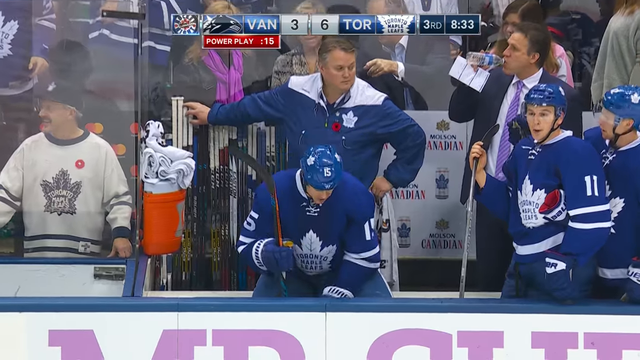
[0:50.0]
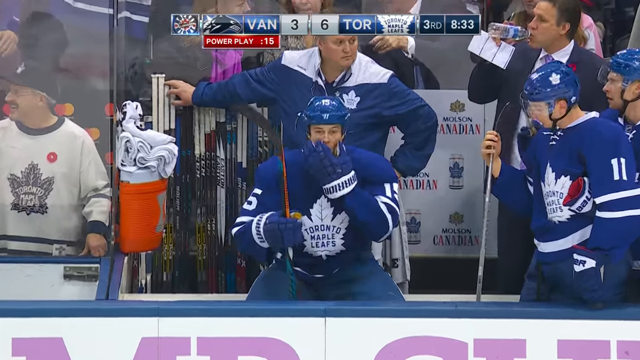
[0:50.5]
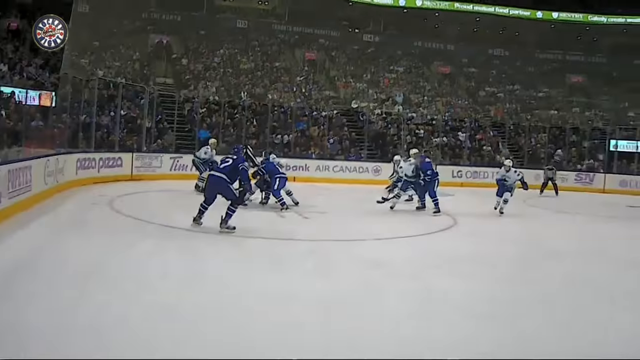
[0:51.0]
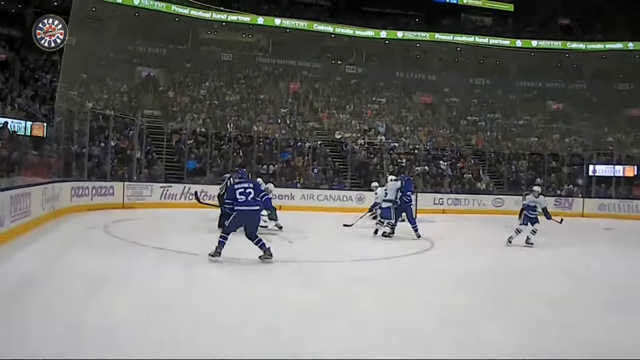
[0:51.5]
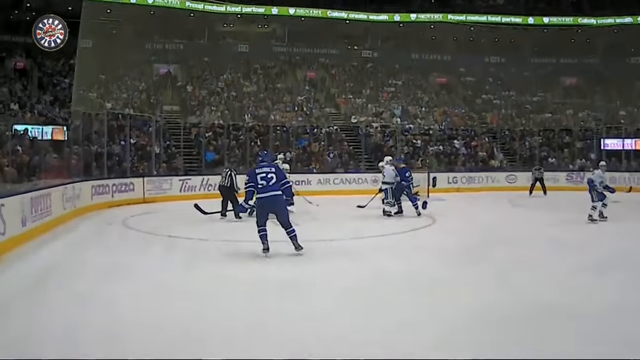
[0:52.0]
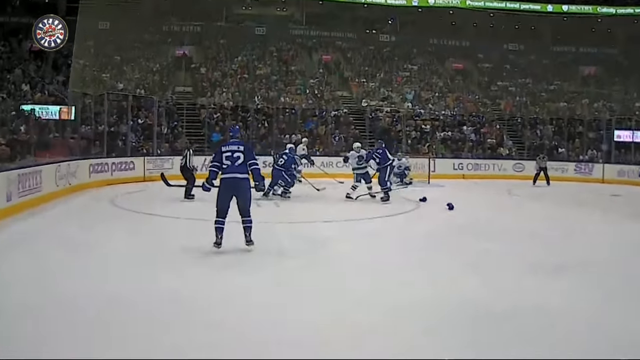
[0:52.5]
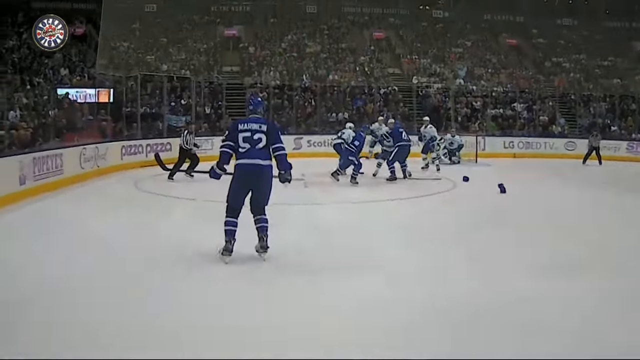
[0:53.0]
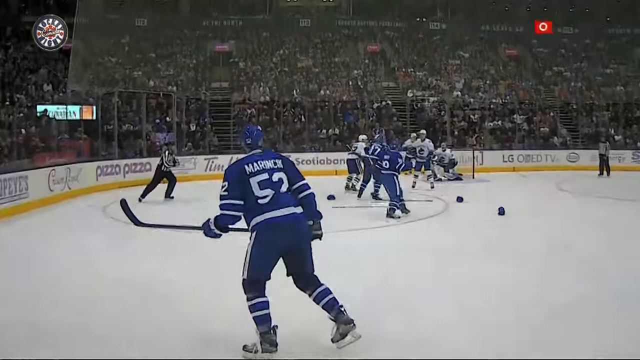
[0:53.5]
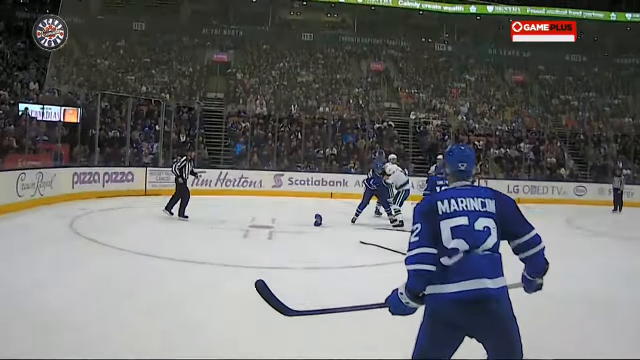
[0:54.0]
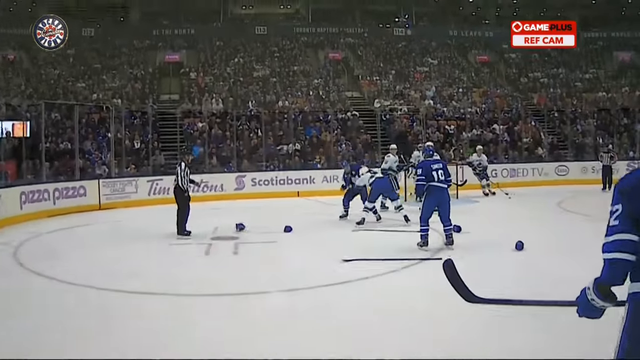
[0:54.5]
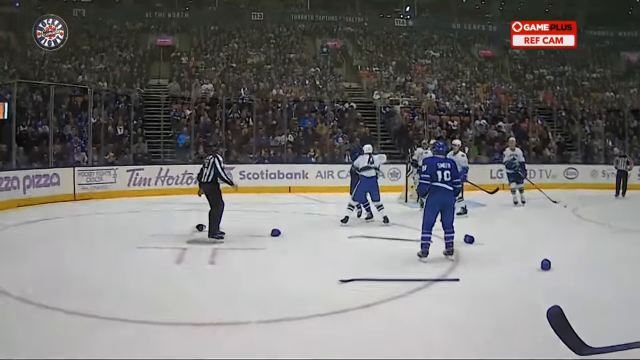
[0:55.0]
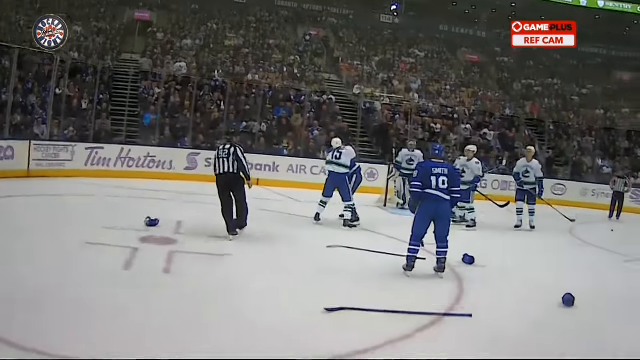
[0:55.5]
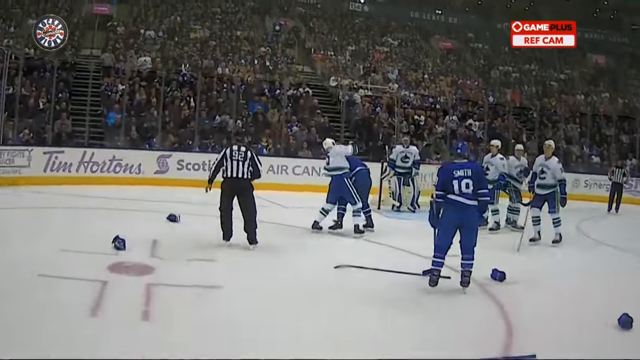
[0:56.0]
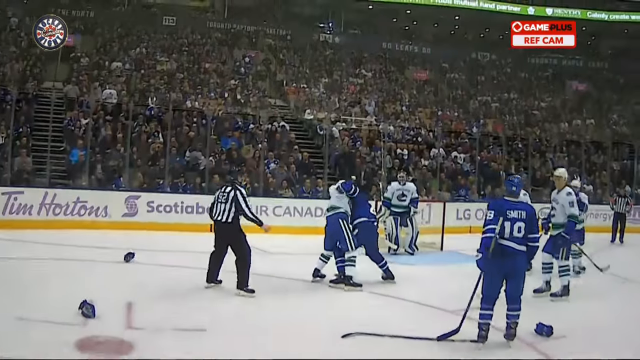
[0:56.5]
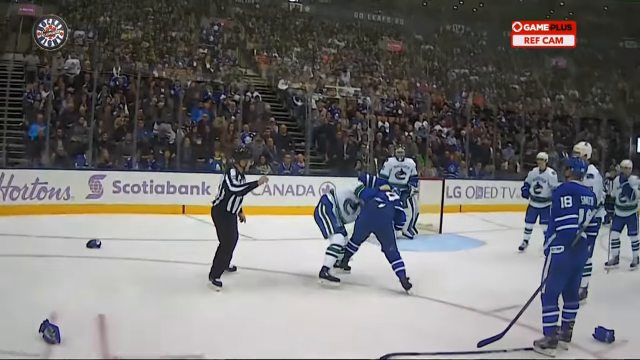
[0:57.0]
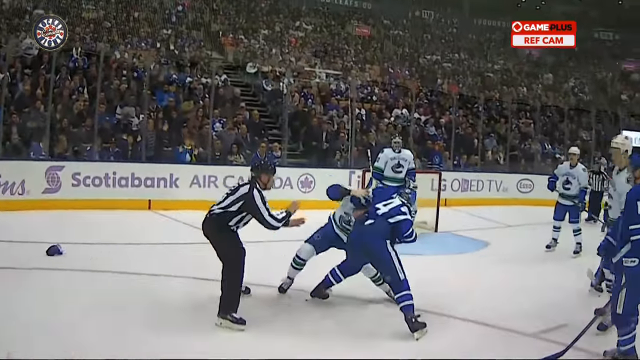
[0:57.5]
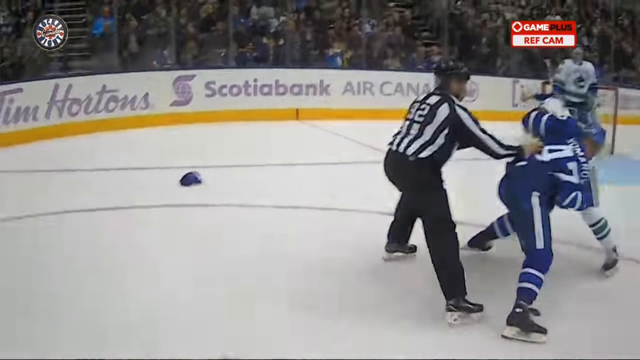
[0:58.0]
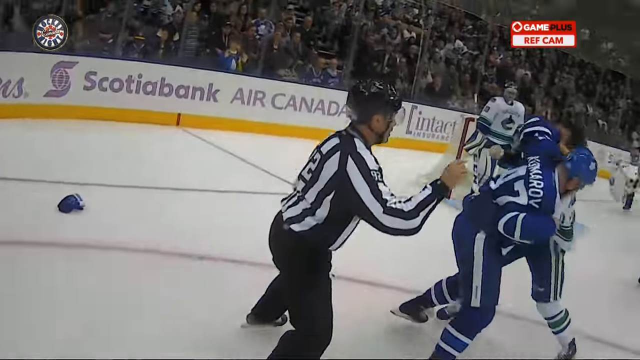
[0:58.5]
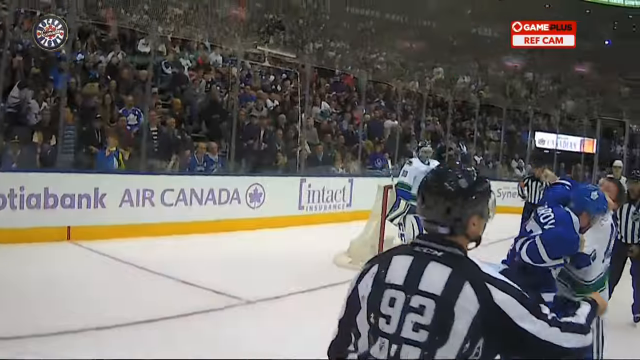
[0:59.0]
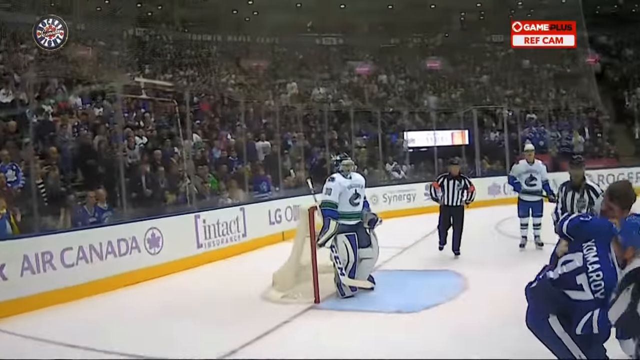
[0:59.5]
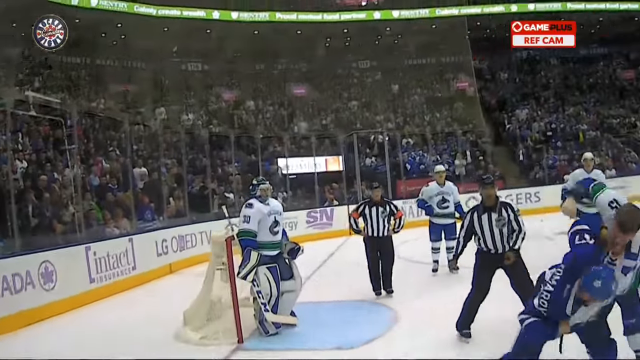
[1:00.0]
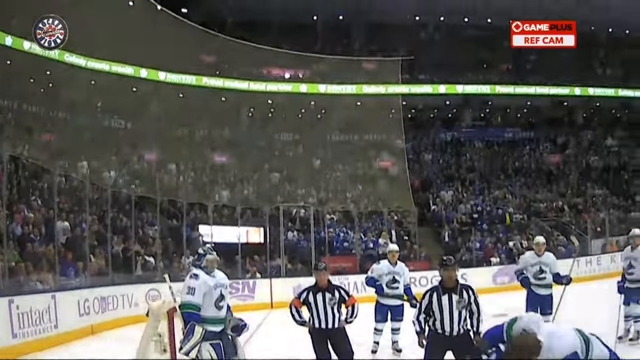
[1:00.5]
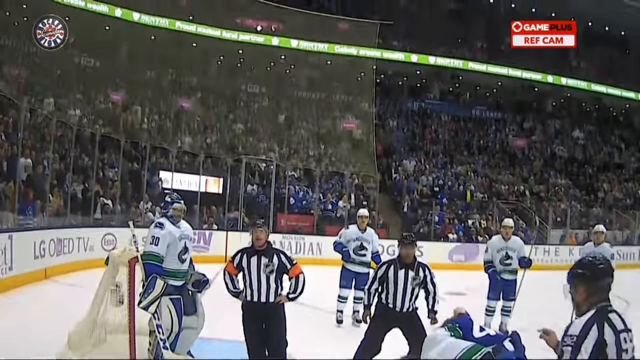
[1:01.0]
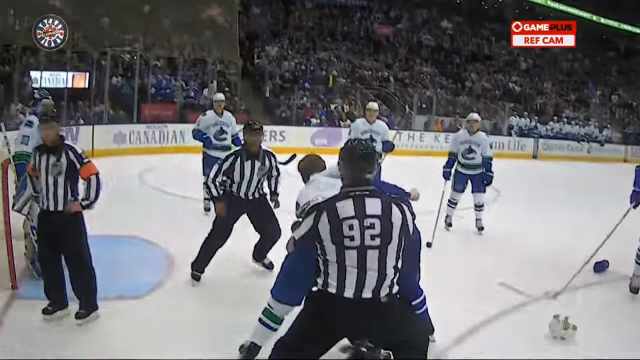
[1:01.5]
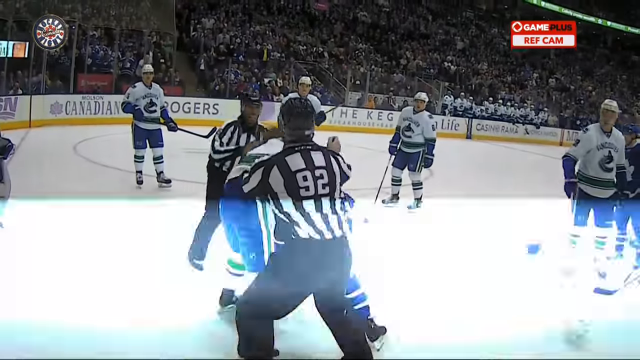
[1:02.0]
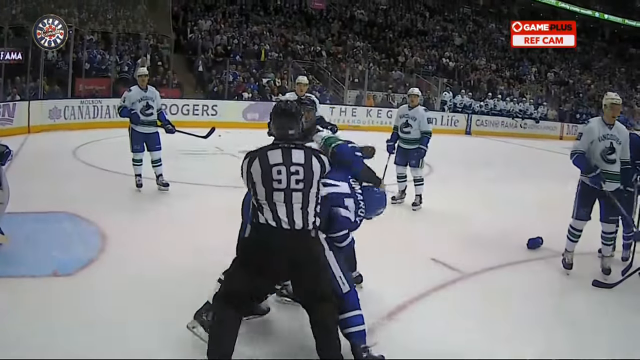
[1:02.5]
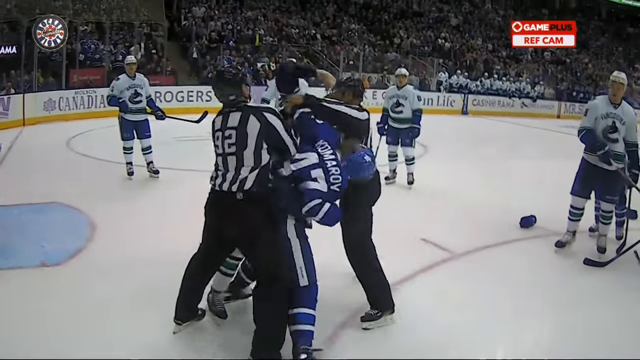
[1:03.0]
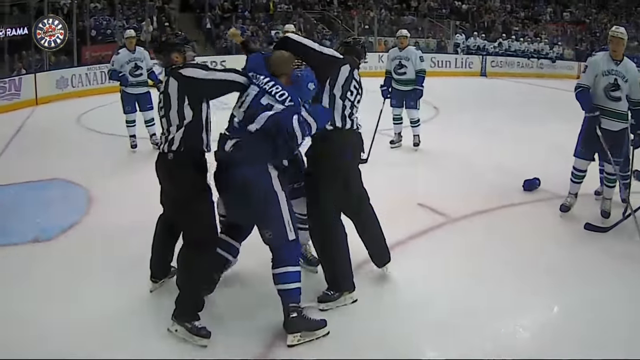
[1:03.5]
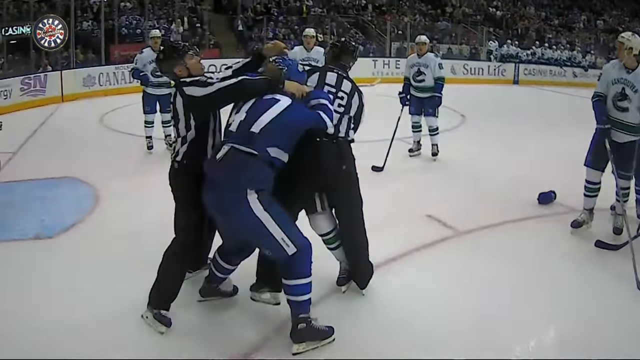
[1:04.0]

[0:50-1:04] A different angle shows the fight from a referee camera, from the point of view of one of the referees who is standing and watching rather than one of those interacting with the players and breaking up the fight. In the top right-hand corner a red and white badge says "RefCam Game Plus": "RefCam" is red text on a white background, "Game" is white, and "Plus" is black. A small "SN" logo is in the bottom right-hand corner, and another logo in the top left says "Hockey Night". The ice is white, and many logos for Canadian businesses cover the side of the rink, the rails and the walls. Multiple players sit around watching the fight, waiting for it to end. One player uses his hockey stick to move a helmet out of the way so no one trips on it.